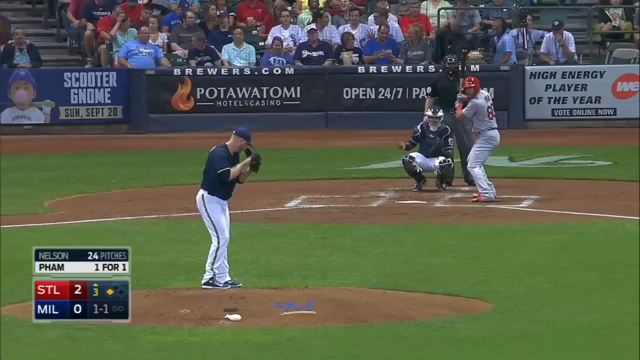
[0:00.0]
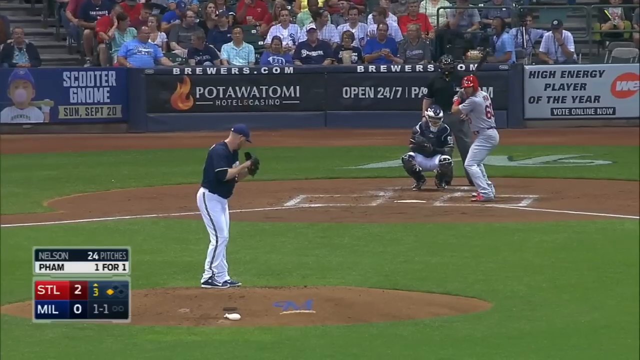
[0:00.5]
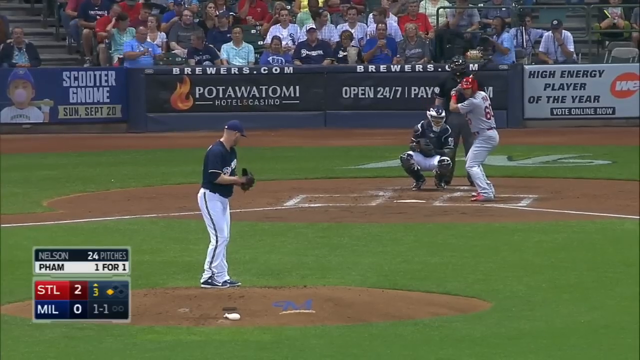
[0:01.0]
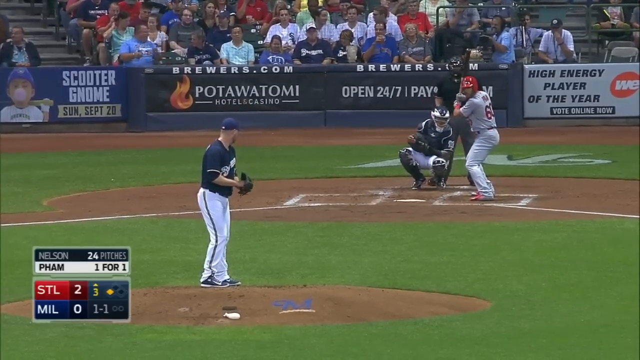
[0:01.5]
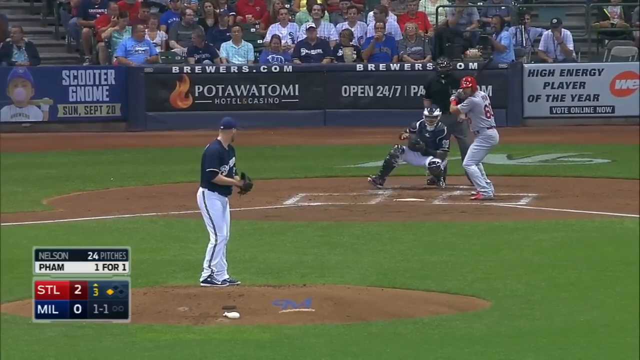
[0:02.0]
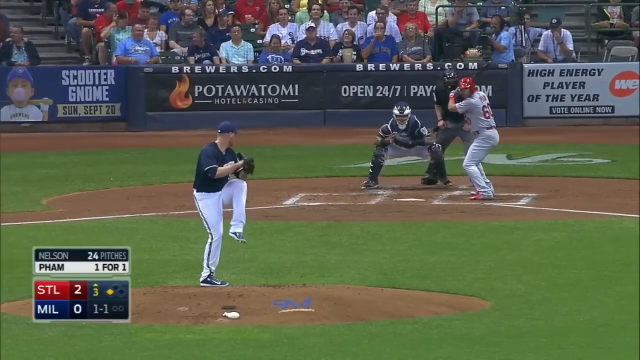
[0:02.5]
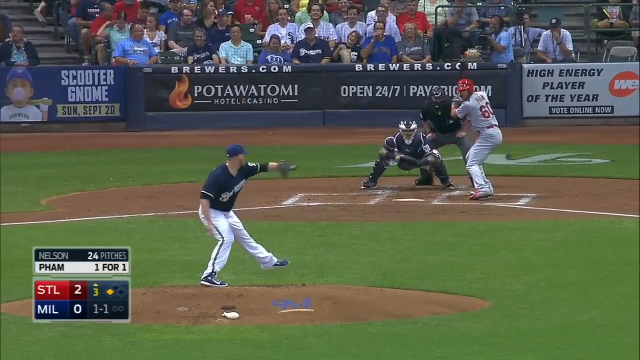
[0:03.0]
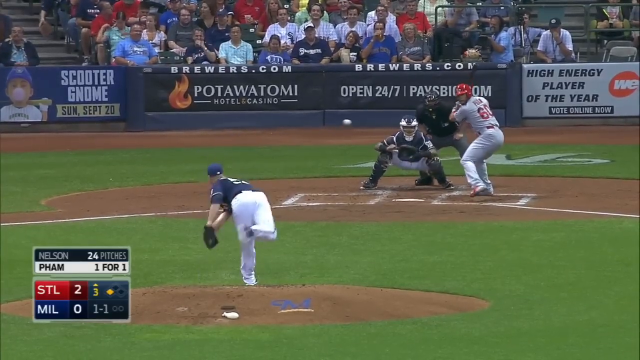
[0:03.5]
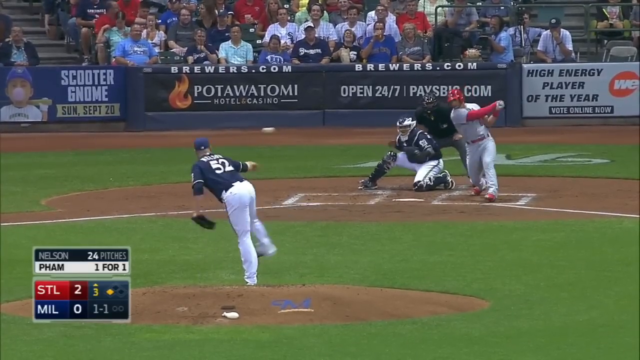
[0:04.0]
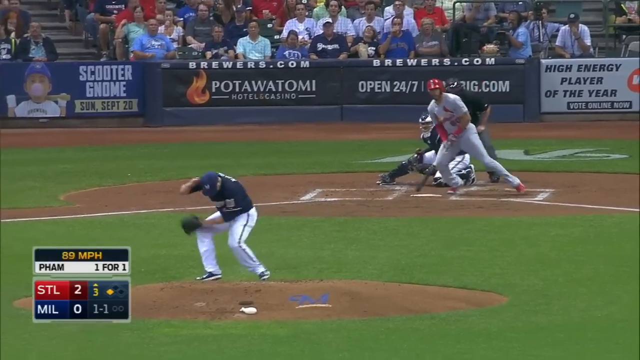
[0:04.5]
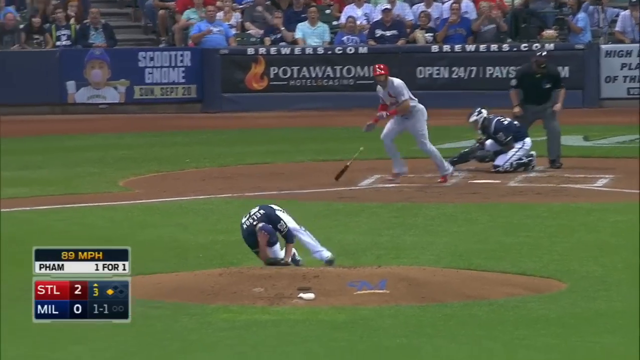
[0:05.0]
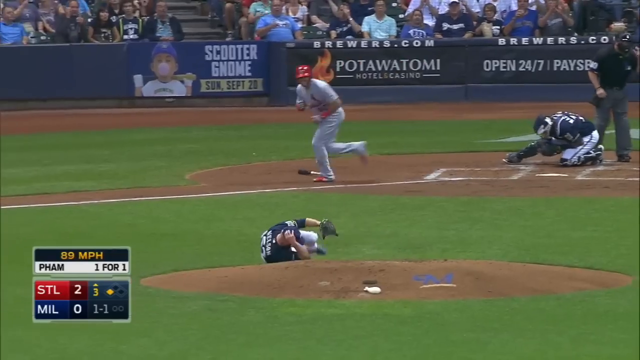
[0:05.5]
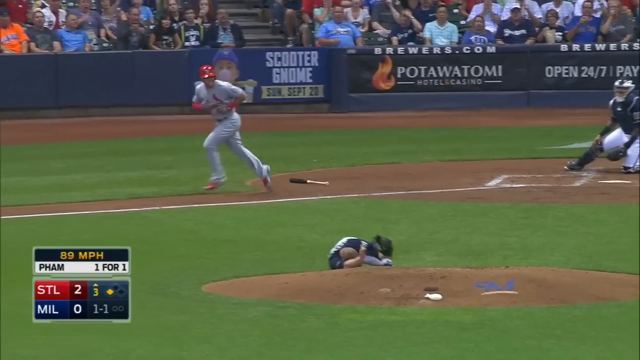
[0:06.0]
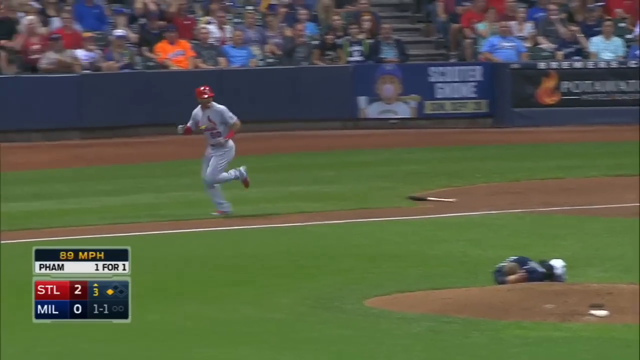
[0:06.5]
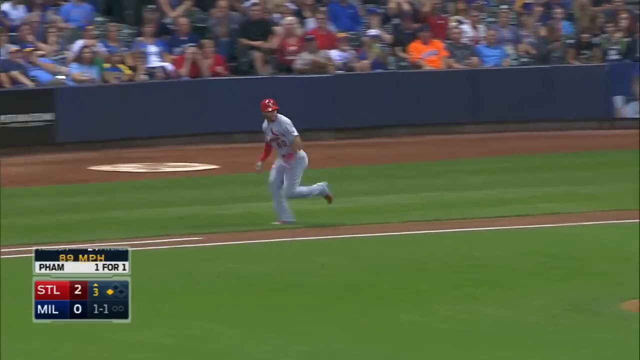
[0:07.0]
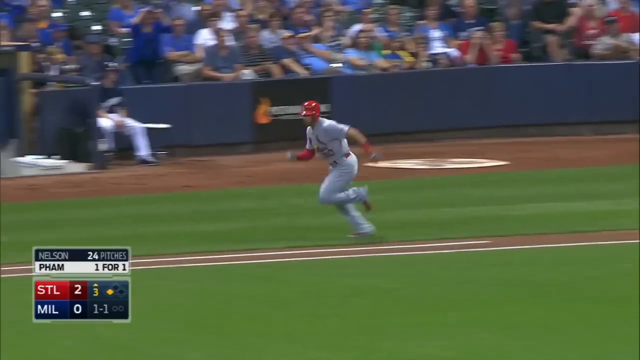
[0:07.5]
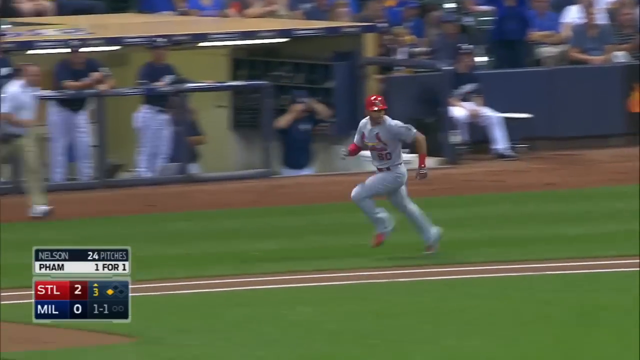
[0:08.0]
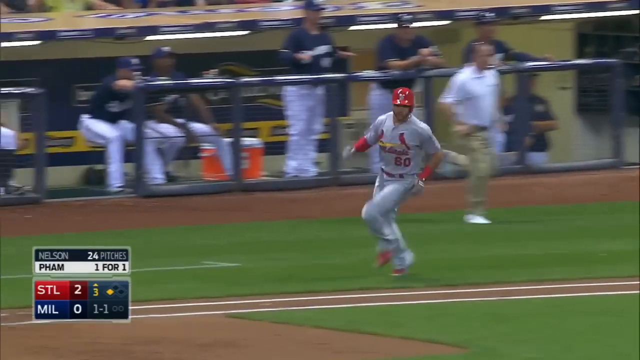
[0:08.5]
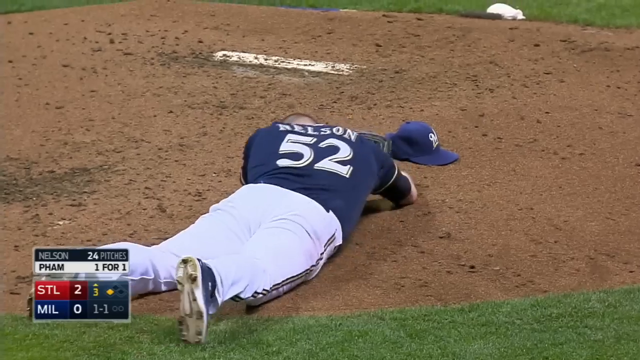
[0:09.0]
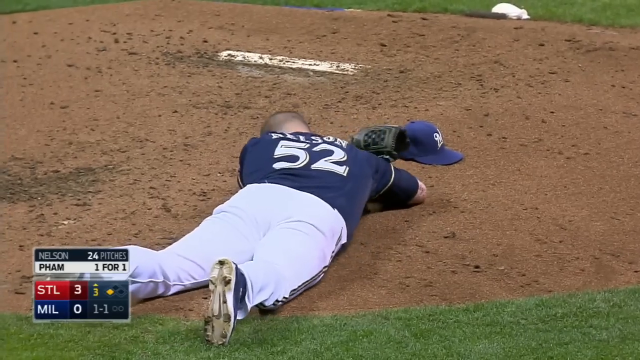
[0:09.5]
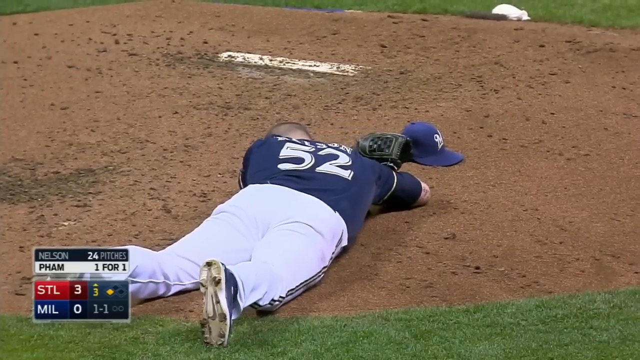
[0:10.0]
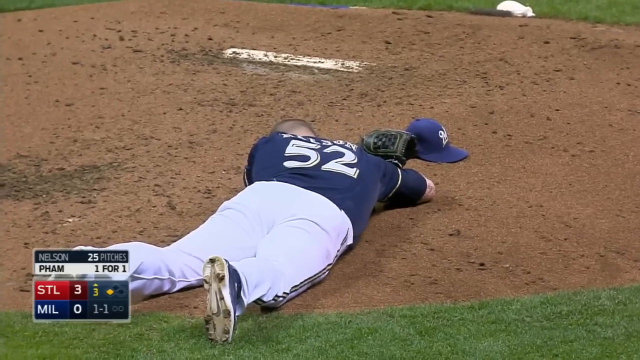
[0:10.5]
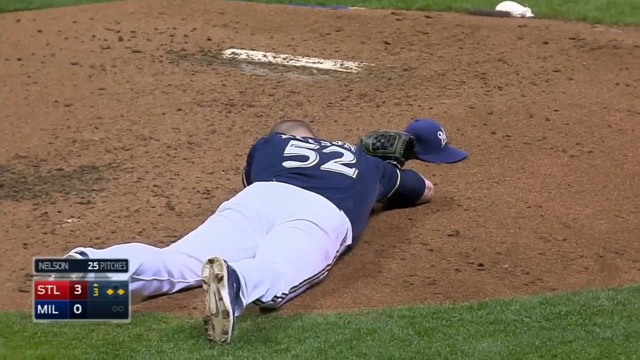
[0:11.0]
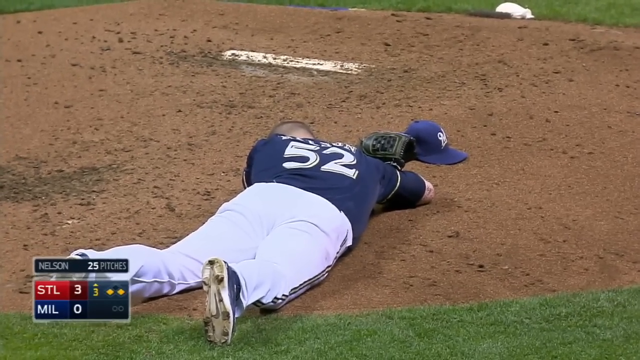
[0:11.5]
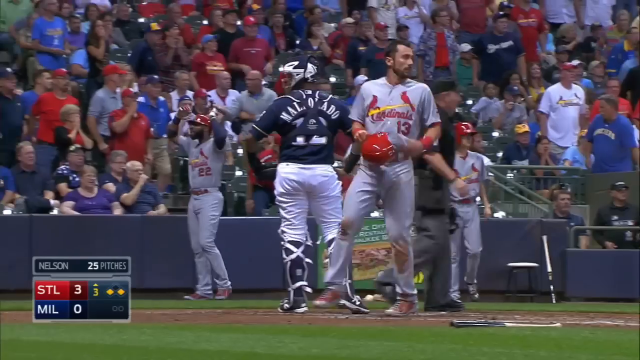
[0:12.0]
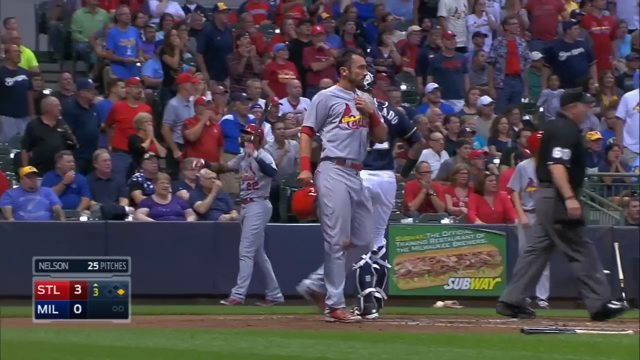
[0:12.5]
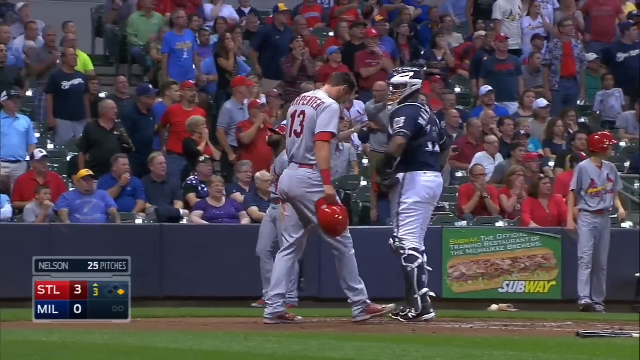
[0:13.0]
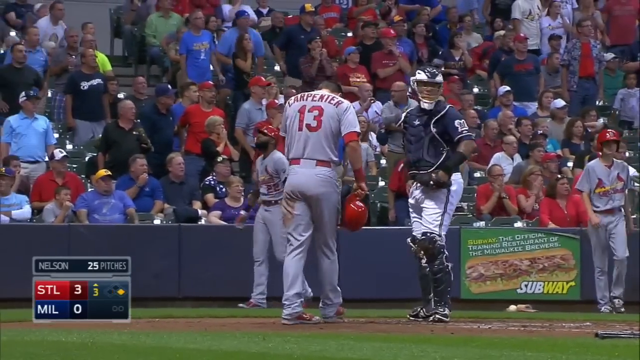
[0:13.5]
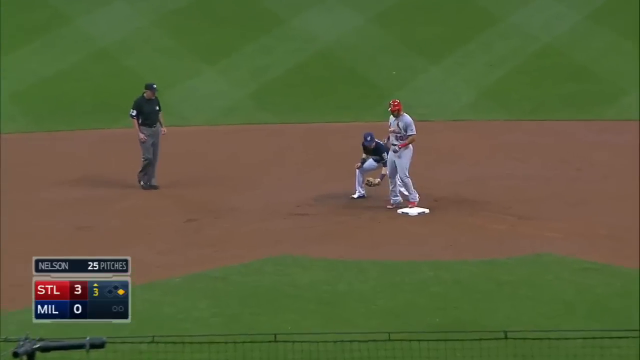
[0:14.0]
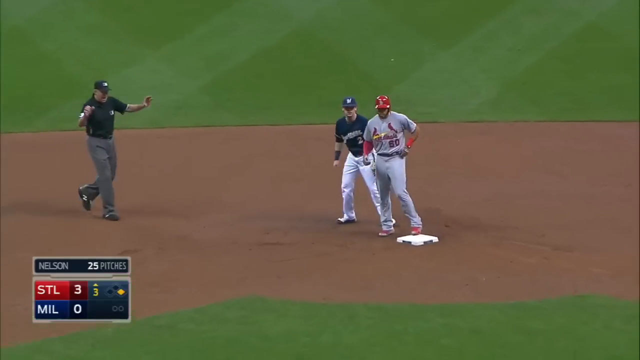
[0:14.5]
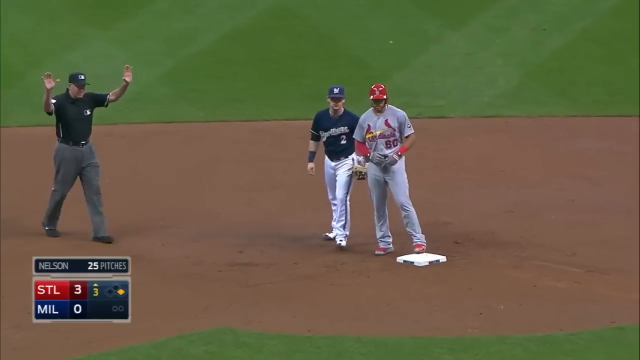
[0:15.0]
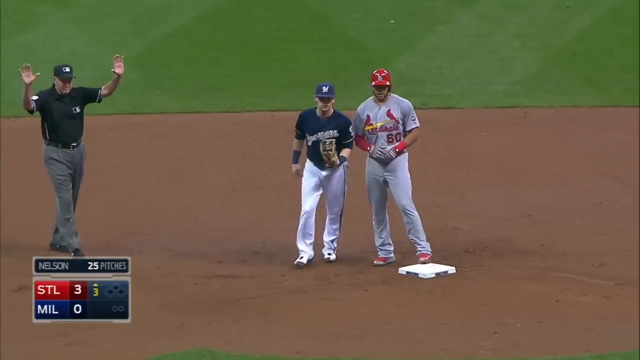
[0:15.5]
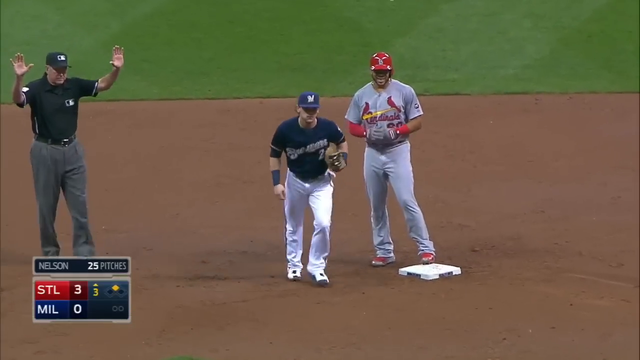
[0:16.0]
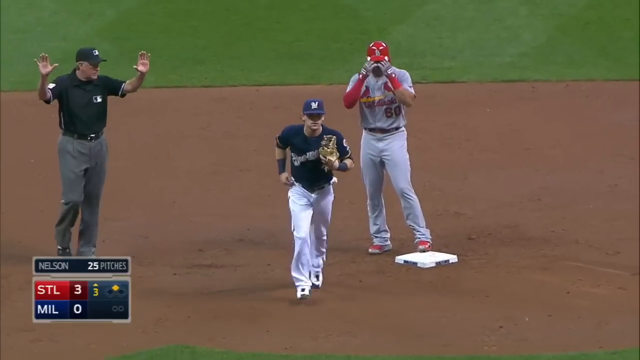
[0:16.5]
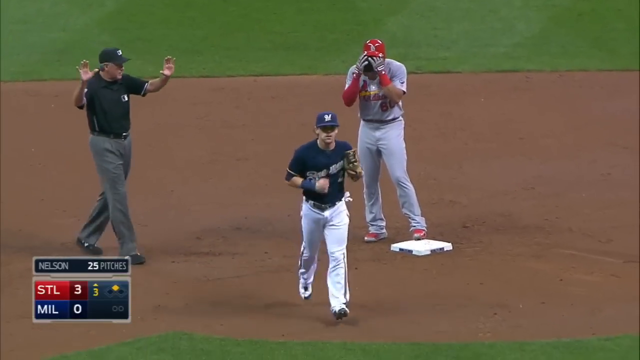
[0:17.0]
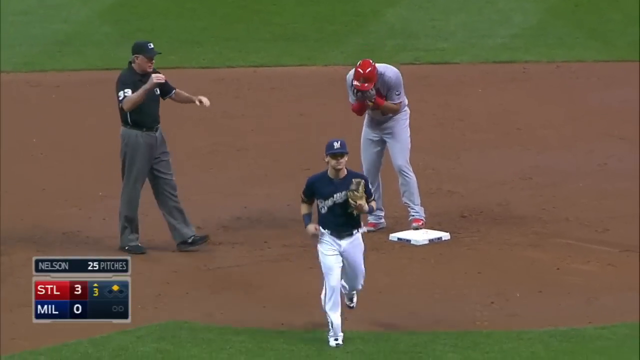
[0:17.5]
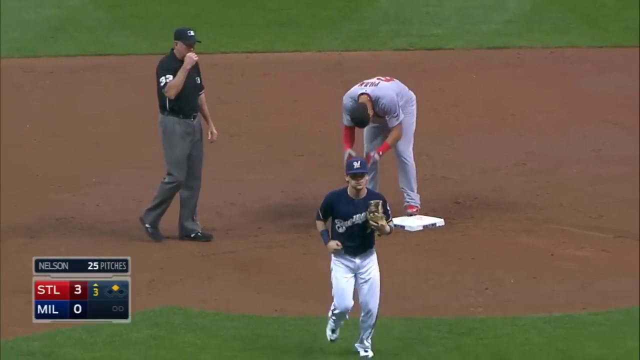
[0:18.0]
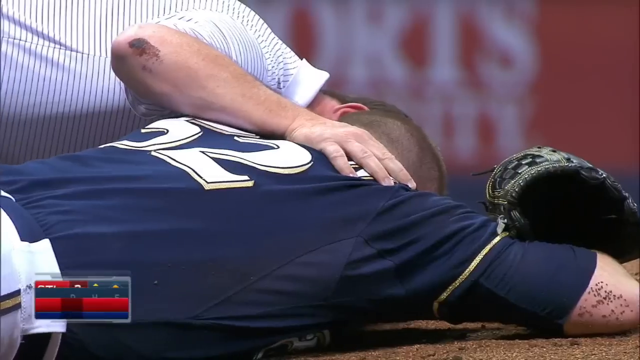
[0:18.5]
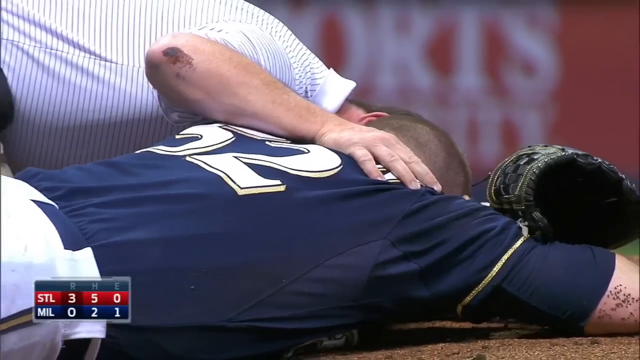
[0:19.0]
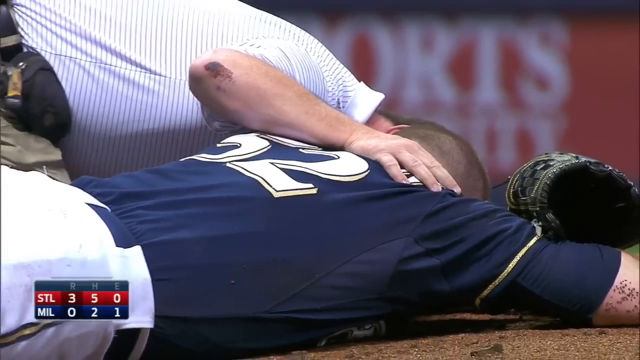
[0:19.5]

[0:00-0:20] A baseball game is underway at the stadium in Milwaukee, Wisconsin, where the visiting St. Louis Cardinals lead the Milwaukee Brewers 2-0 in the top of the third inning, with nobody out, a runner on first and a 1-1 count on the batter, Pham. The Milwaukee pitcher is Nelson, who has thrown 24 pitches so far. The right-hander gets set on the mound and delivers. The pitch is hit right back at him and strikes him in the head. Pham easily reaches first base but appears concerned about Nelson, who lies on his stomach near the mound.